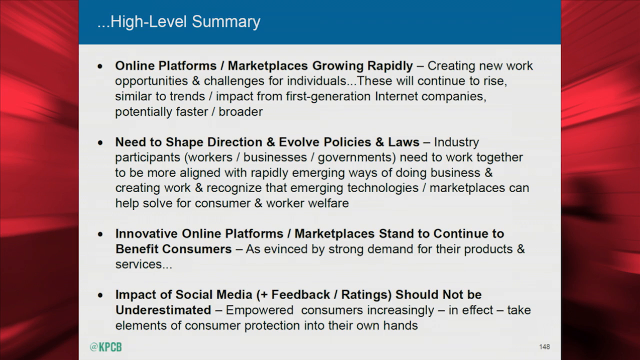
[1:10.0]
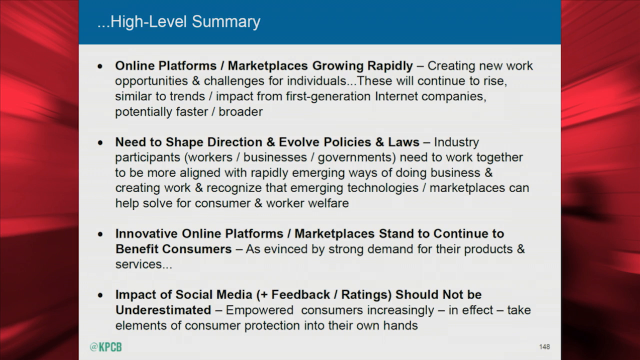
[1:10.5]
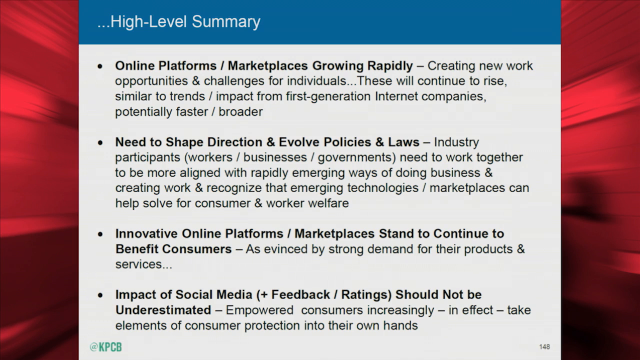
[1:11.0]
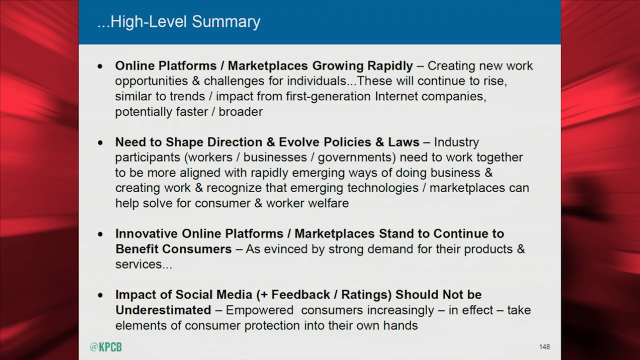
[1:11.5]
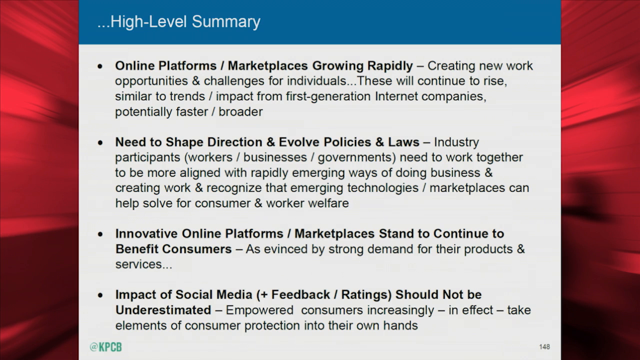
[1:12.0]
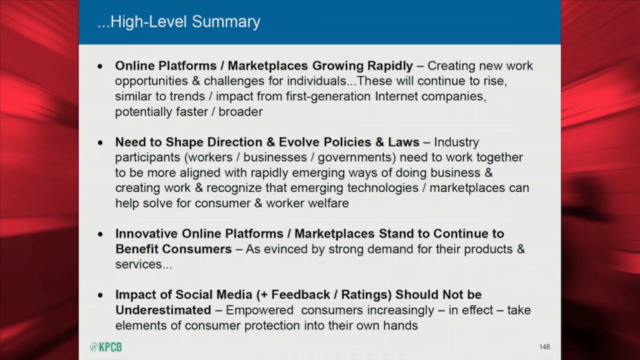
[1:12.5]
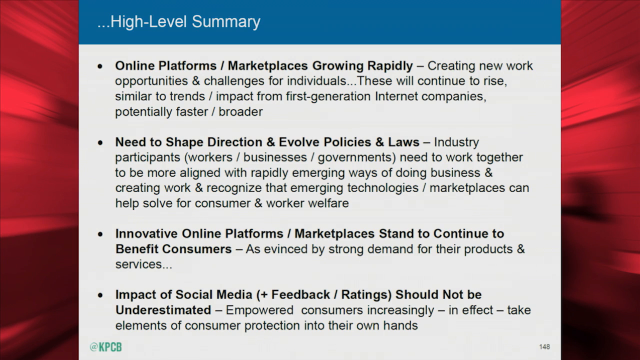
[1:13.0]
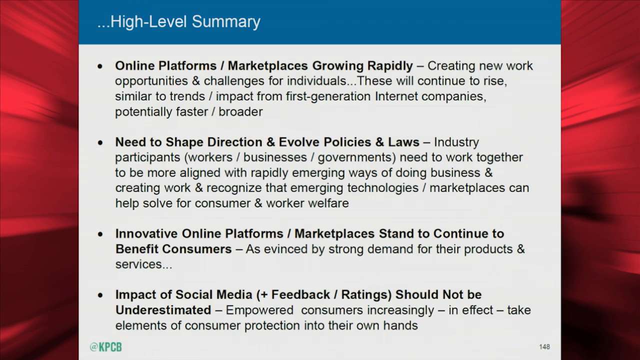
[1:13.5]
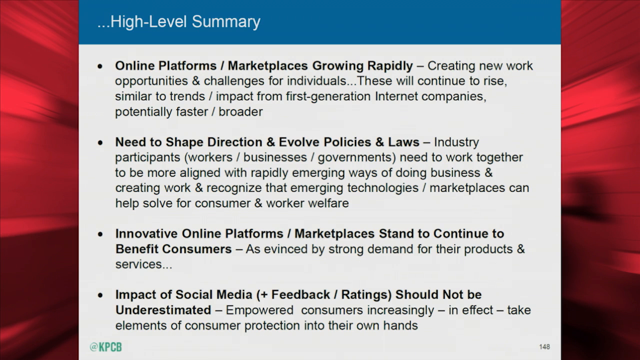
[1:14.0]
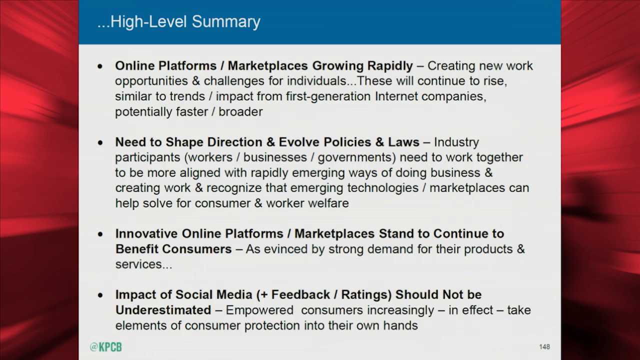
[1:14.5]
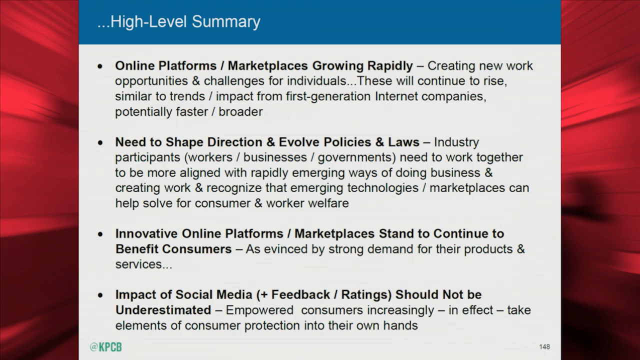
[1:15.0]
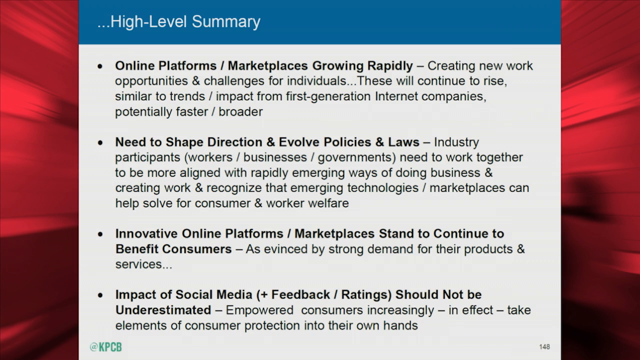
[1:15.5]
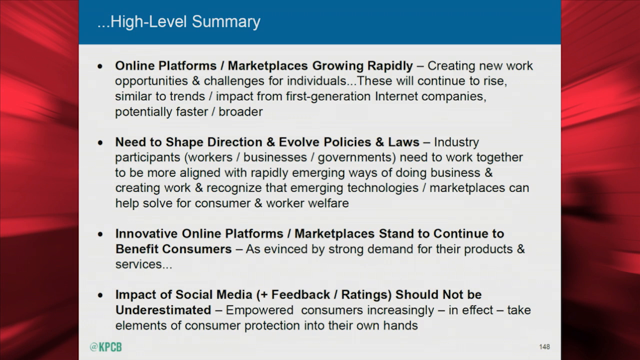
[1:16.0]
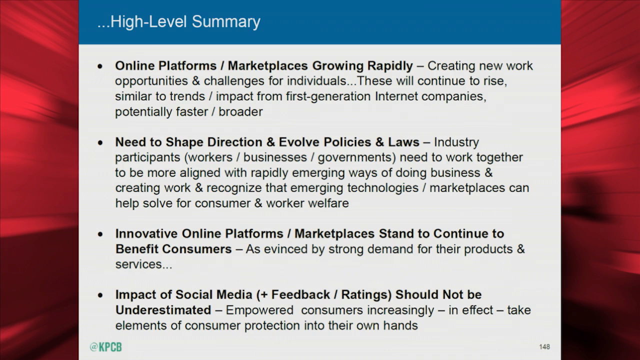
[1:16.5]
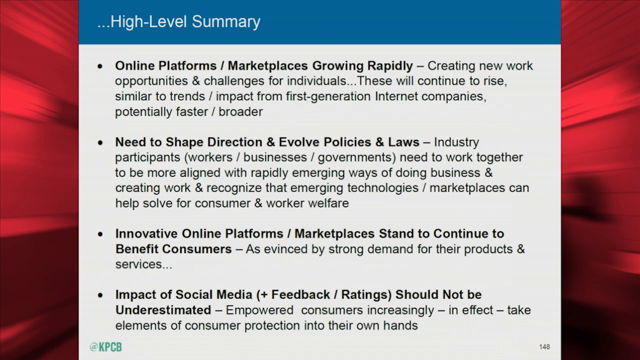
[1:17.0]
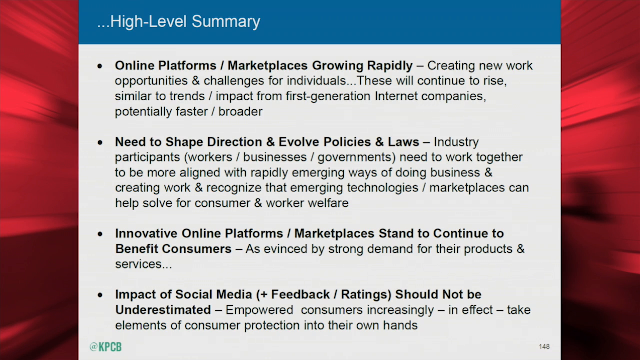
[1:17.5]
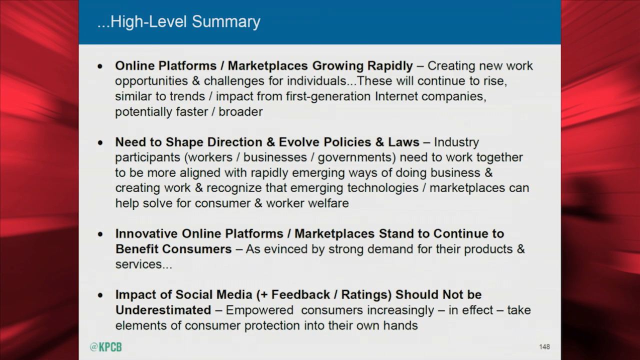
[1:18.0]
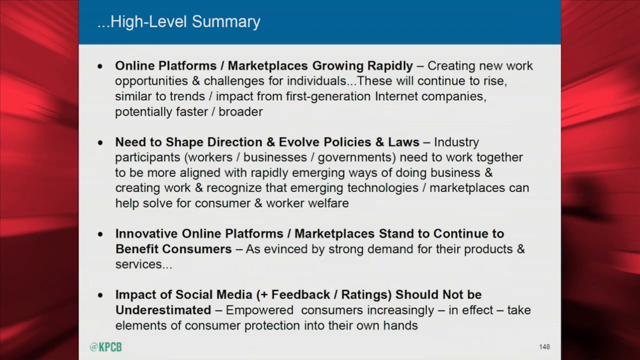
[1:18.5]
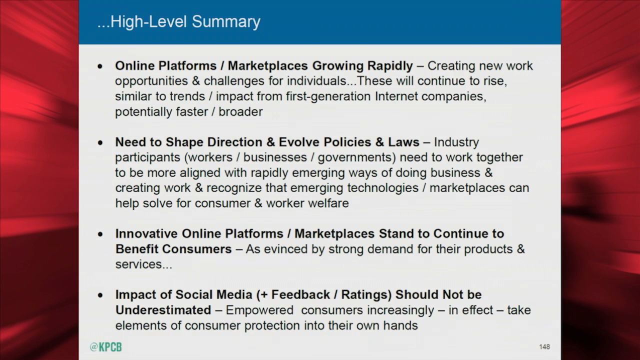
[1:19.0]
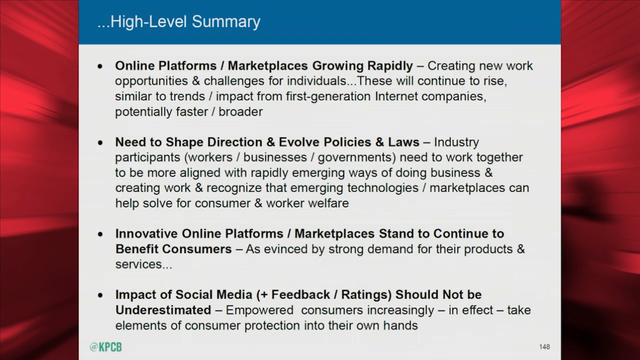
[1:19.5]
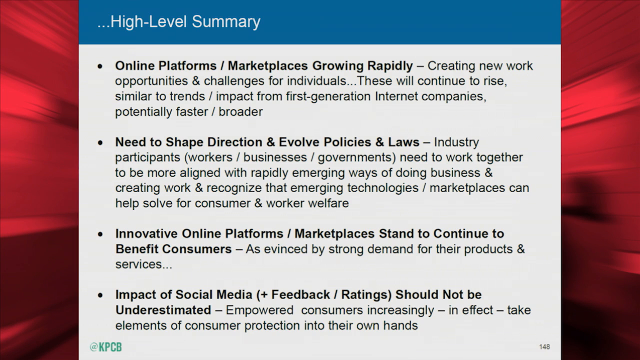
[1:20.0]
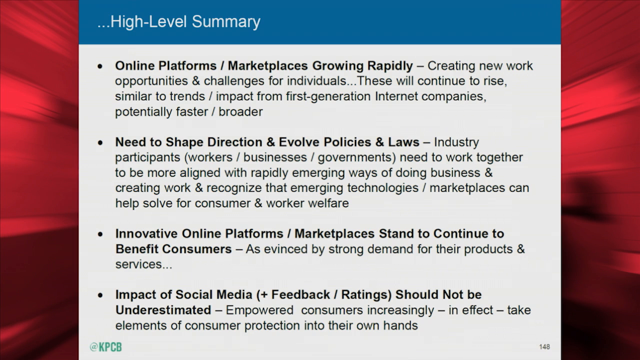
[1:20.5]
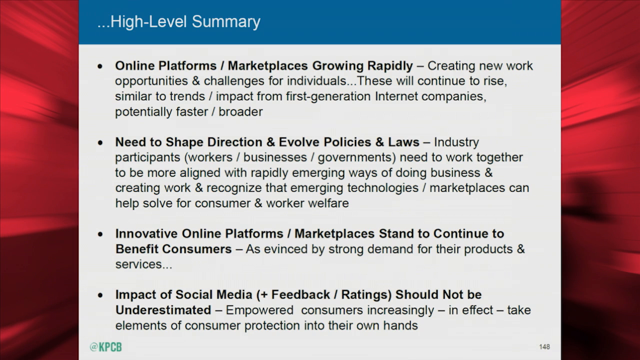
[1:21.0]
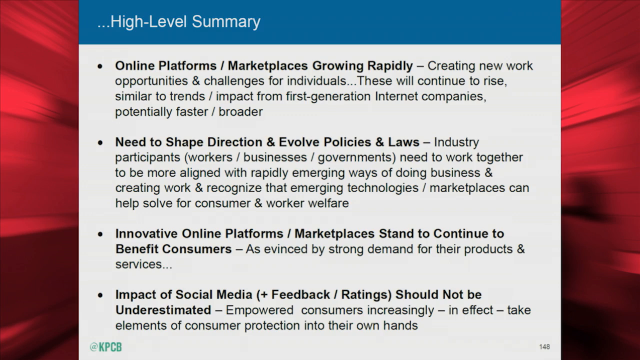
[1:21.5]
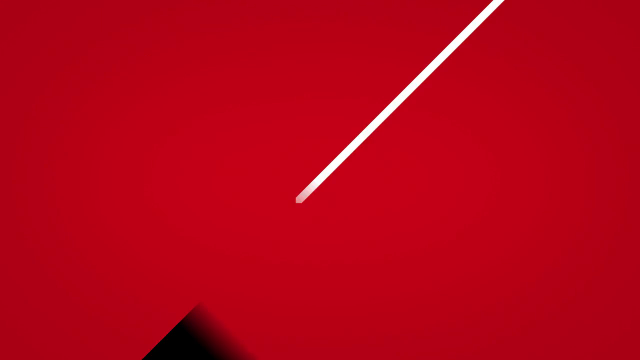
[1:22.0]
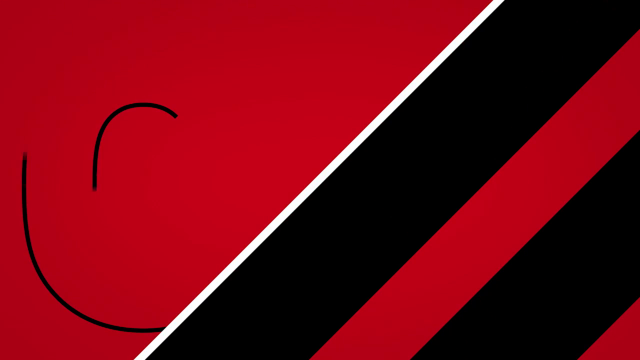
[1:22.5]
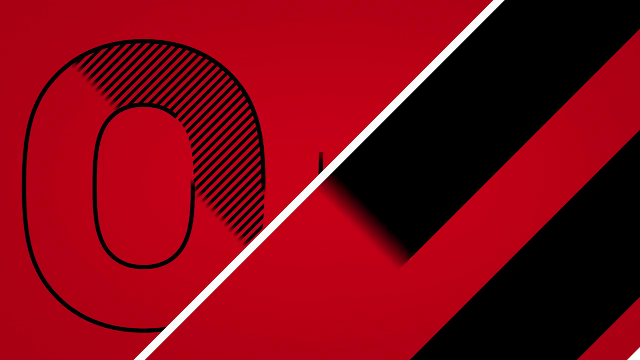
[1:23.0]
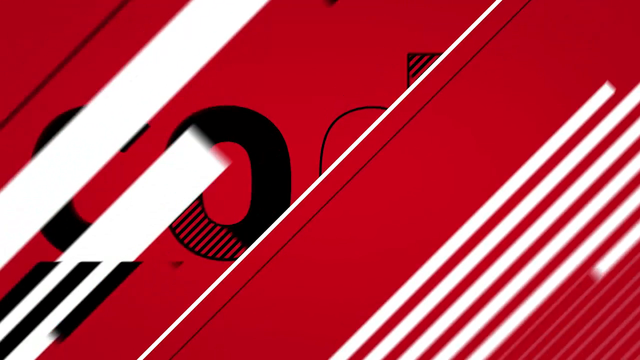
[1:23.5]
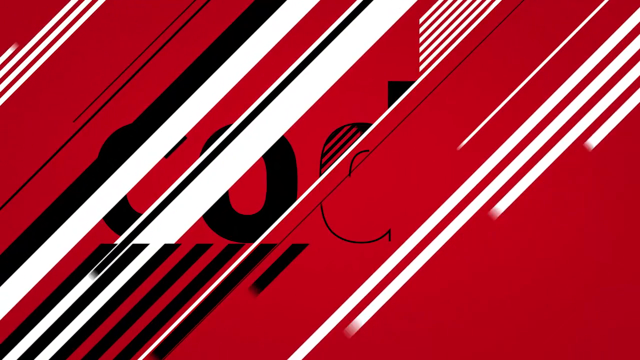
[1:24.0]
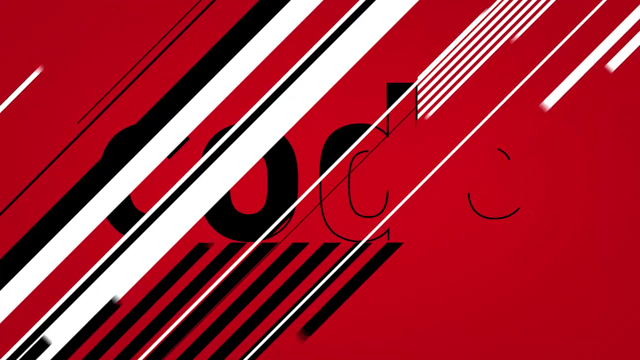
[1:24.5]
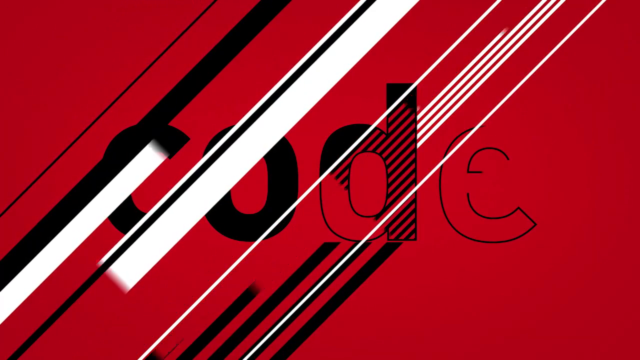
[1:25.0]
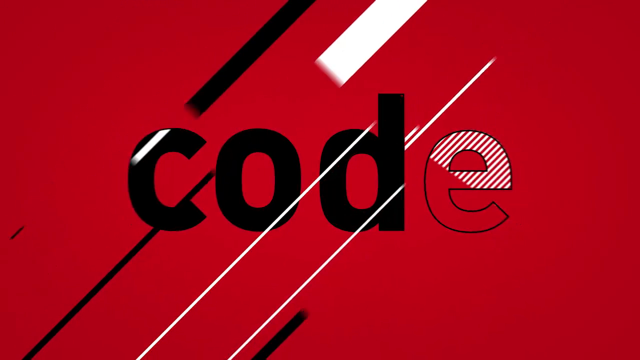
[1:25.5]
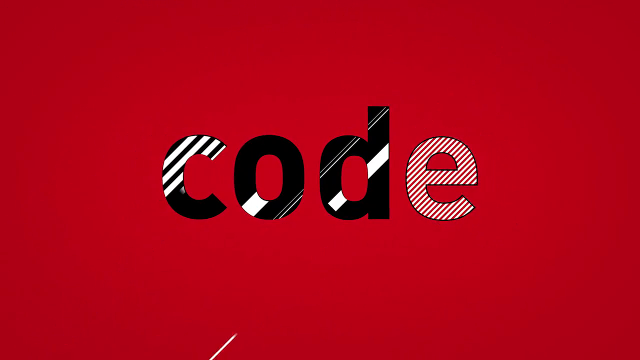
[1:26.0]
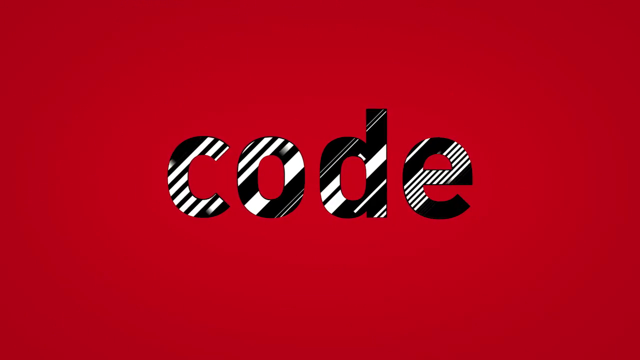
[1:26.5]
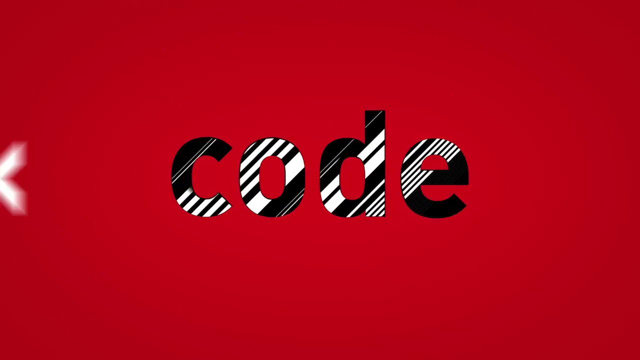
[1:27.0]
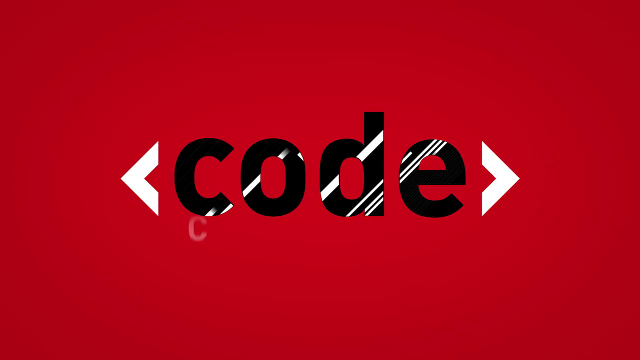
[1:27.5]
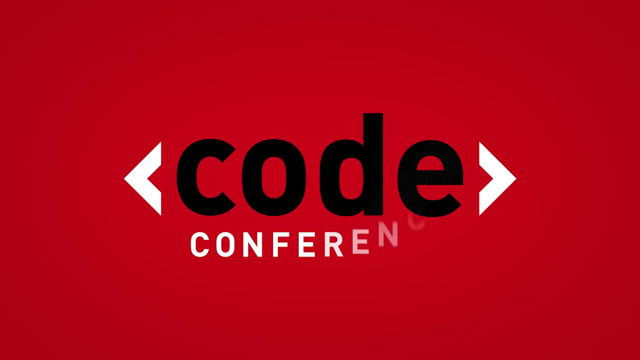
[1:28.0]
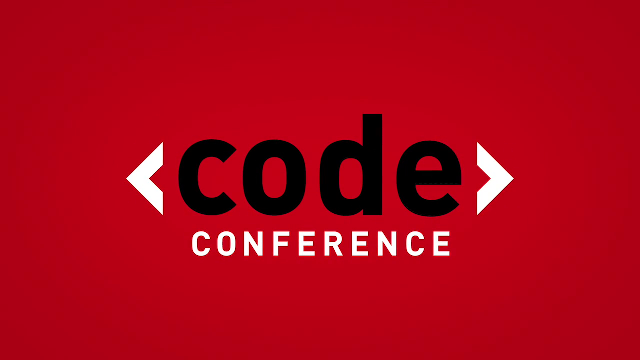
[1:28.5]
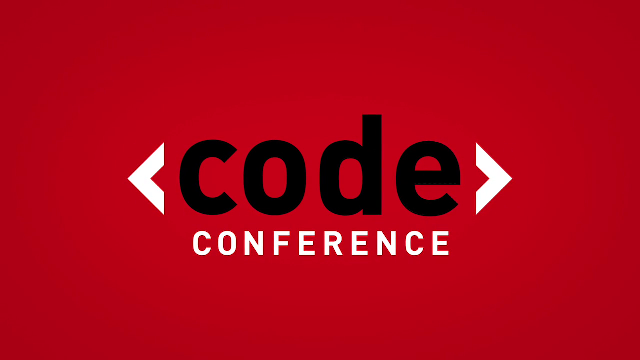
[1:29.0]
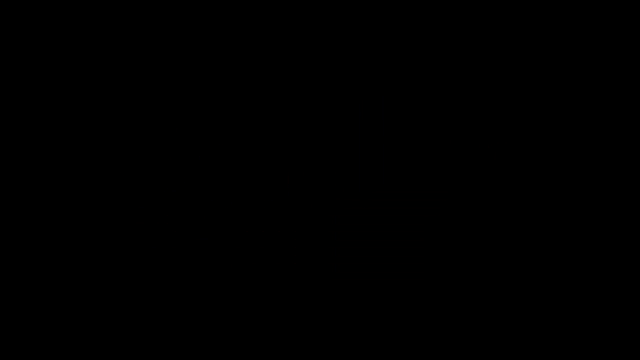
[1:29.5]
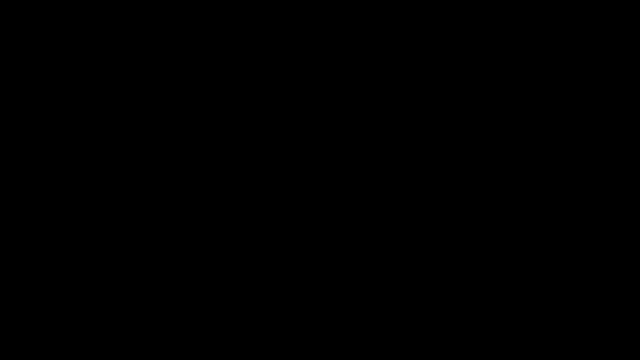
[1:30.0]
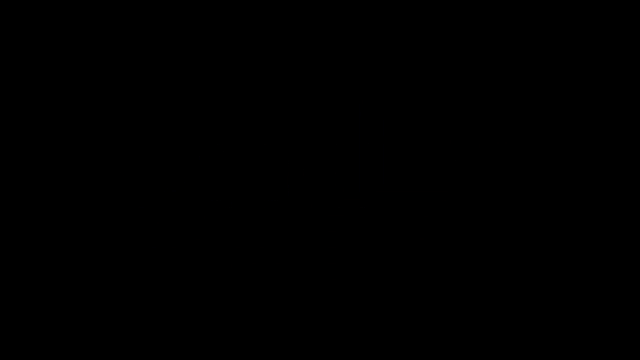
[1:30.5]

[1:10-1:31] An image with a red background that almost looks like fabric has what looks almost like a page of paper in the center, taking up most of the screen. A blue bar across the top reads "high-level summary", with four bullet points in black lettering directly underneath, the first in bold: "Online platforms/marketplaces growing rapidly-Creating new work opportunities, & challenges for individuals... These will continue to rise, similar to trends/impact from first-generation internet companies, potentially faster/broader"; "Need to shape direction & evolve policies and laws-Industry participants (workers, business, and governments) need to work together to be more aligned with rapidly emerging ways of doing business & creating work & recognize that emerging techniques/marketplaces can help solve for consumer and worker welfare"; "Innovative online platforms/marketplaces stand to continue to benefit consumers-As evinced by strong demand for their products and services"; and "Impact of social media (+Feedback/Ratings) should not be underestimated-Empowered consumers increasingly - in effect -take elements of consumer protection into their own hands". After a few seconds it suddenly blinks out and is replaced by a red screen. Diagonal flashes come across the right side of the screen, running from top to bottom: a thin white stripe, a thick black bar, a medium red bar, and the bottom corner all black. Meanwhile, letters are drawn in on the left side; as they are drawn, the right side flashes red again, the stripes disappear, and new all-white stripes appear from the bottom. Six thin stripes zoom across the screen from the bottom left, and multiple stripes come from the top and bottom across the rest of the screen. The letters forming in the center spell "code", with stripes of black, red and white running through them before they settle in solid black. Two arrows pointing in either direction appear at the C and the E, and underneath, the word "conference" appears in white.